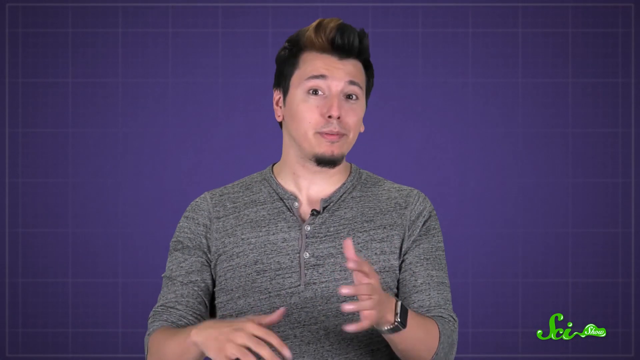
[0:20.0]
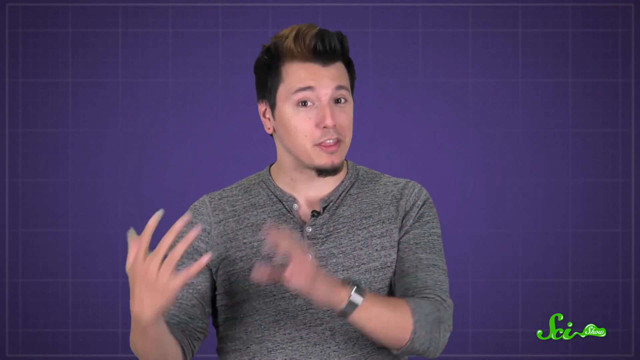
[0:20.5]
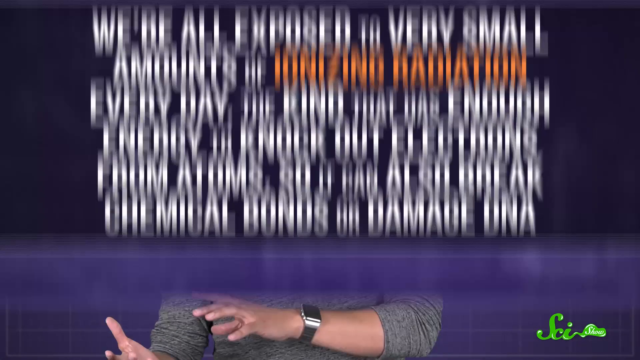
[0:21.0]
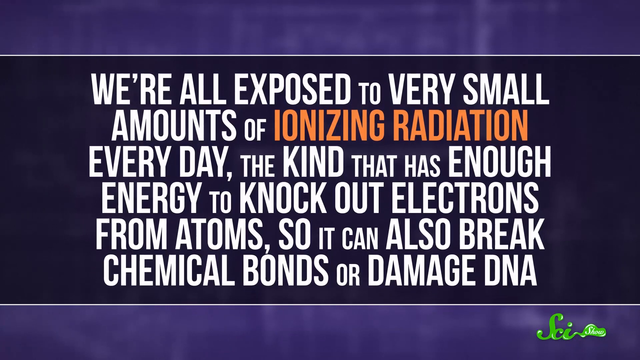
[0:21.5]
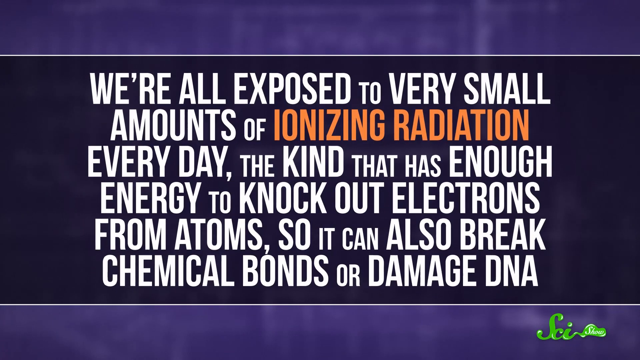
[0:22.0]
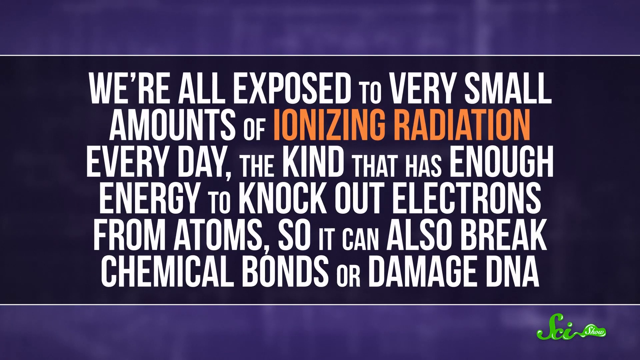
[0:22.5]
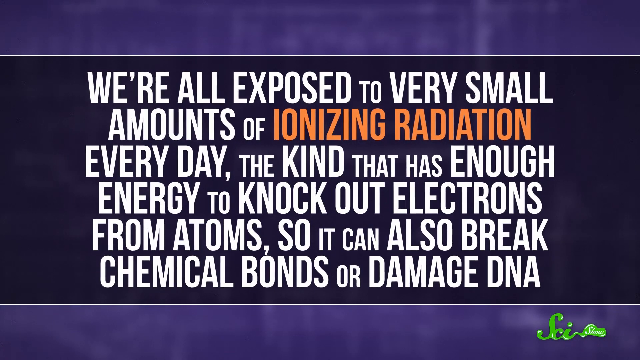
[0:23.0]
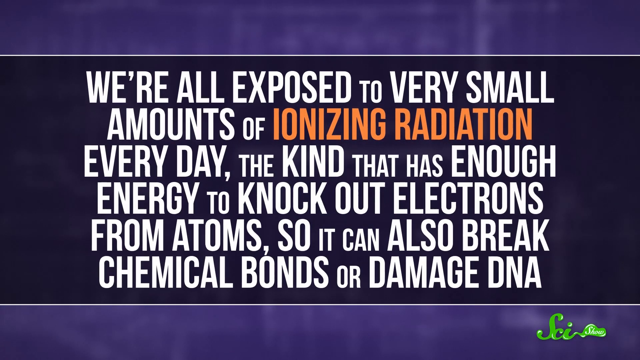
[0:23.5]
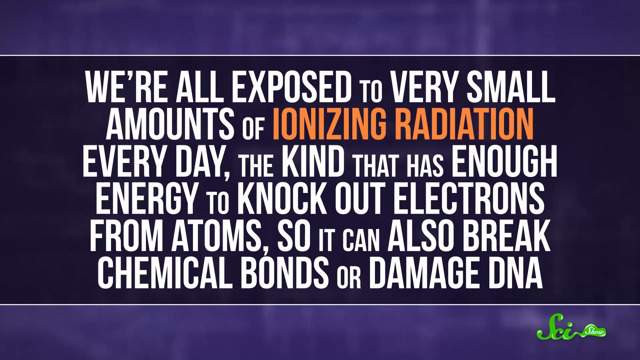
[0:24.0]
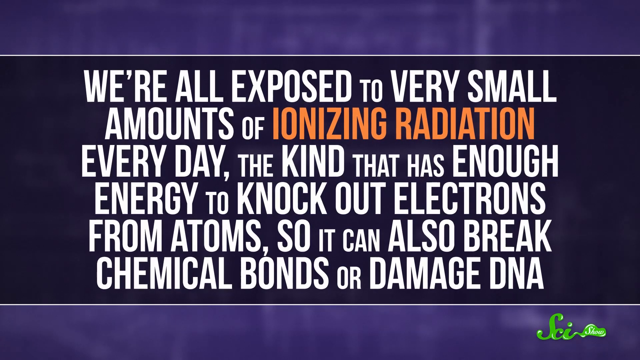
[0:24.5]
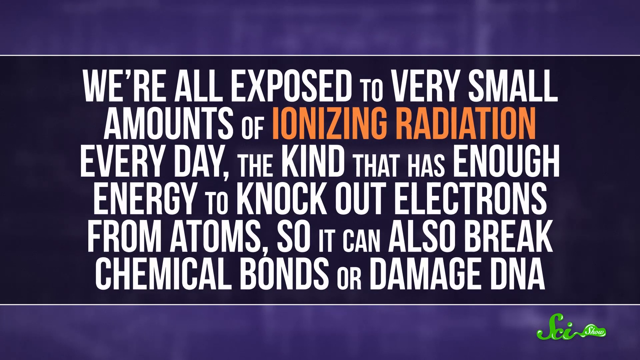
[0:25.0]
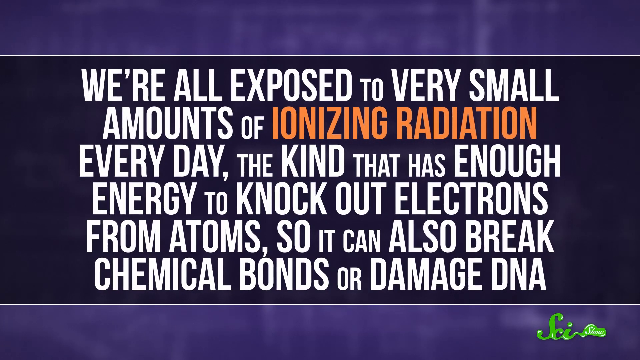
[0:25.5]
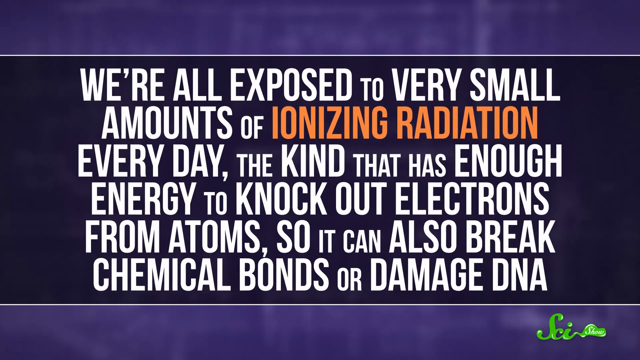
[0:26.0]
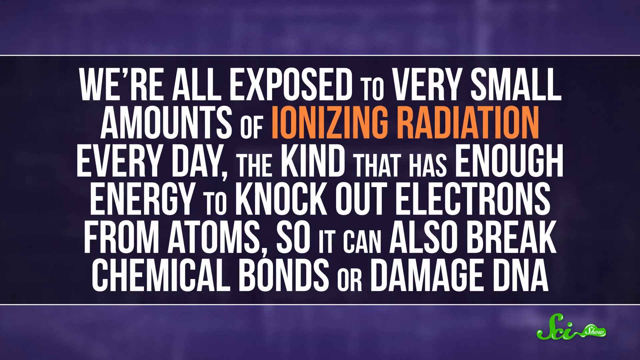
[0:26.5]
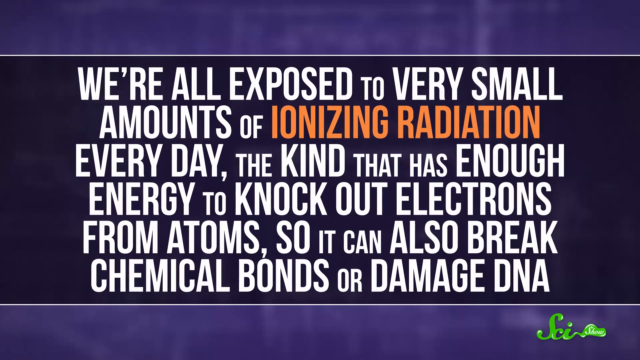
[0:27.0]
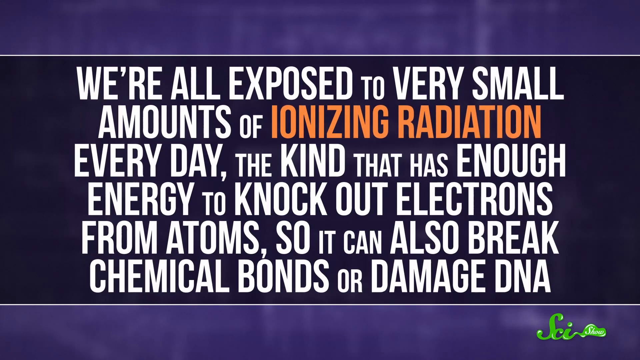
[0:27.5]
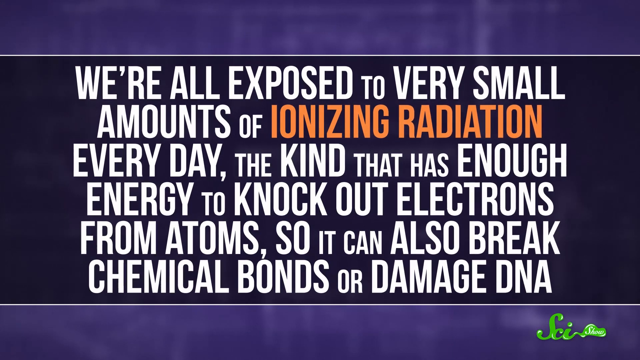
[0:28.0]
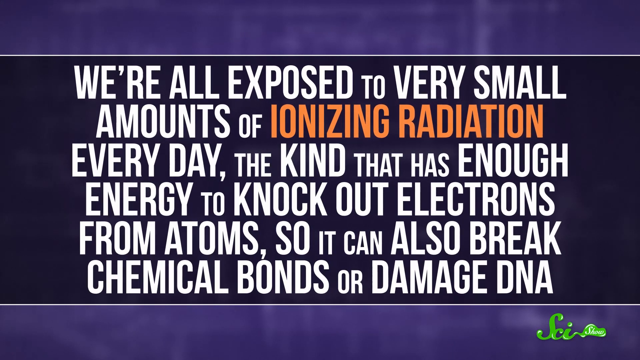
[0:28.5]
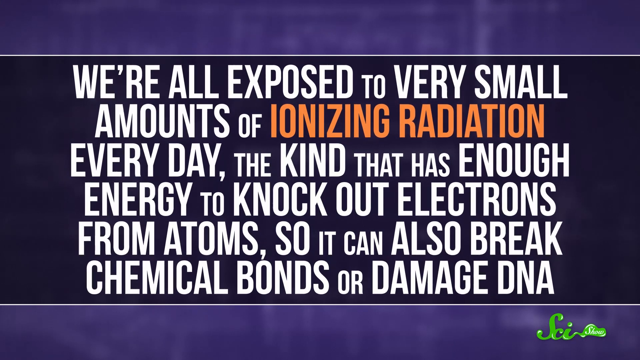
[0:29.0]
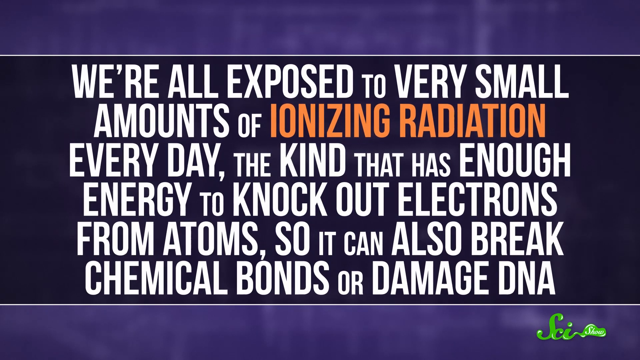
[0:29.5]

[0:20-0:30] The young man in the gray shirt faces the camera and continues speaking, both hands in front of him at chest level, gesturing animatedly. The purplish background with the grid pattern is visible behind him. The scene then transitions to a text screen where a statement appears in large white letters: "We're all exposed to very small amounts of ionizing radiation every day." The words "ionizing radiation" are highlighted in orange. The text continues: "The kind that has enough energy to knock out electrons from atoms, so it can also break chemical bonds or damage DNA." The text stays on screen, slowly and subtly approaching the camera.